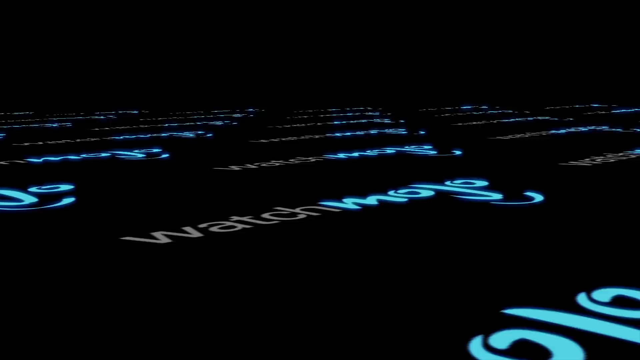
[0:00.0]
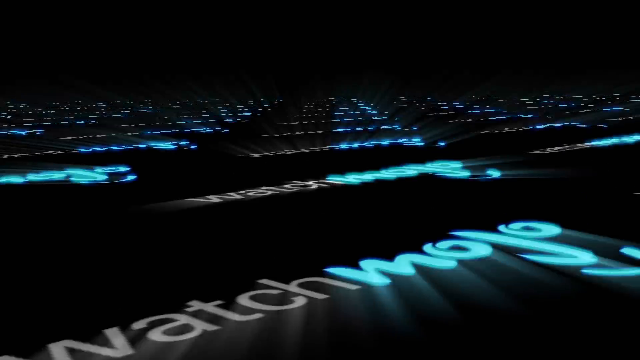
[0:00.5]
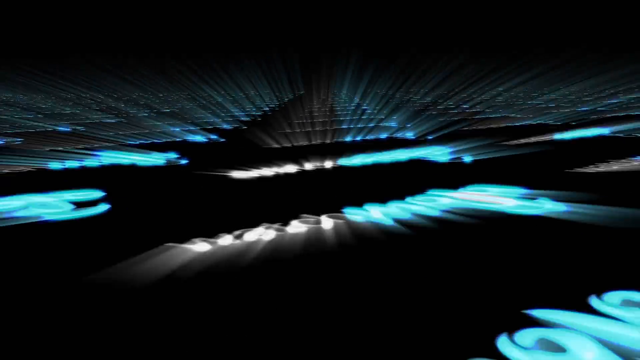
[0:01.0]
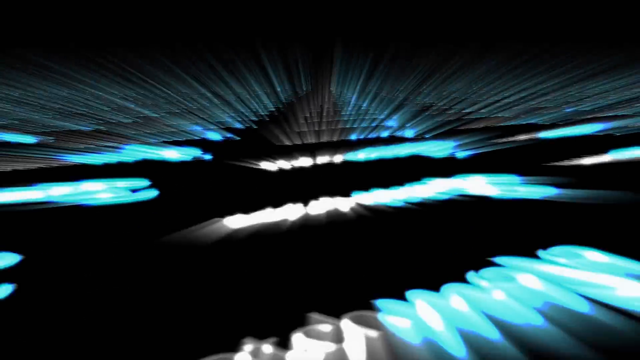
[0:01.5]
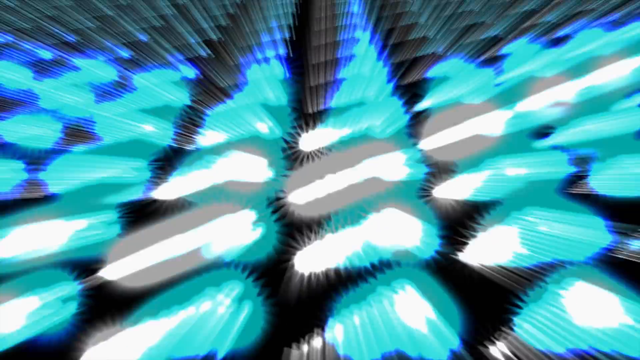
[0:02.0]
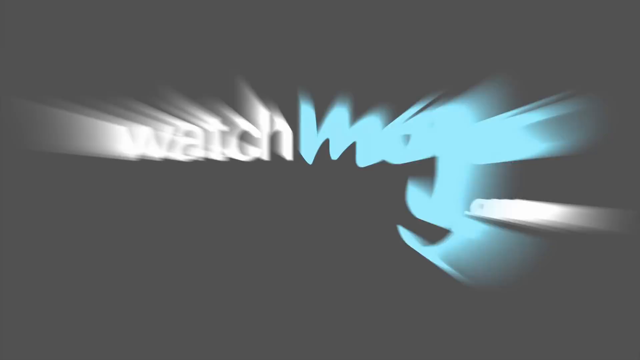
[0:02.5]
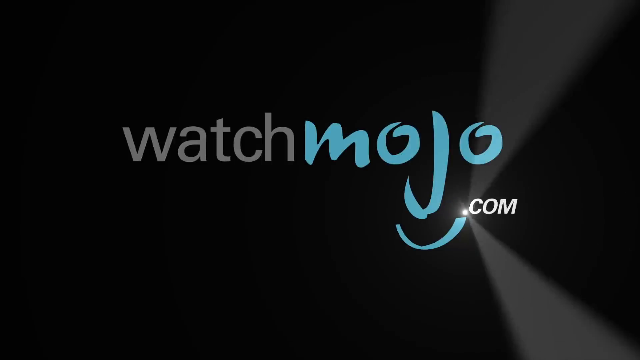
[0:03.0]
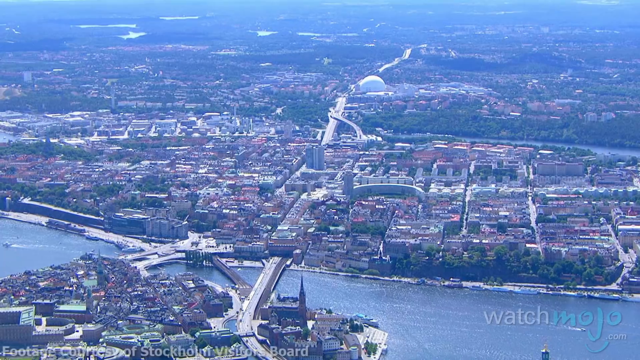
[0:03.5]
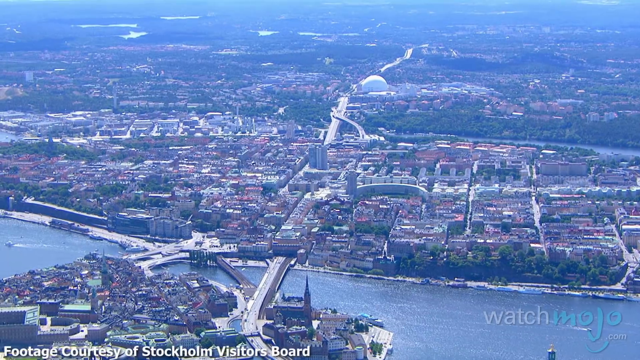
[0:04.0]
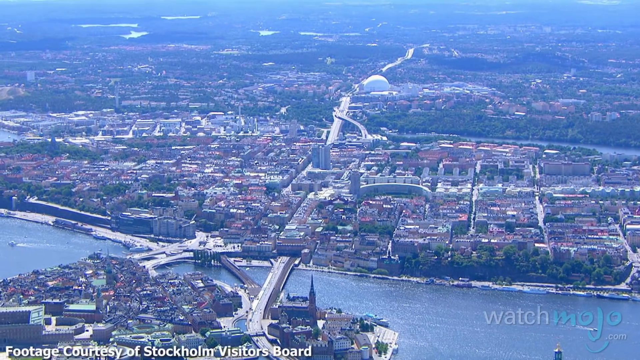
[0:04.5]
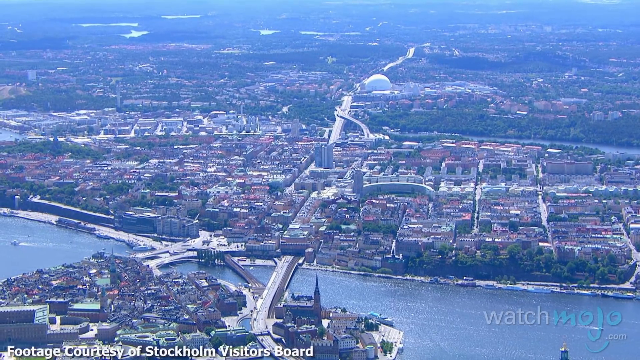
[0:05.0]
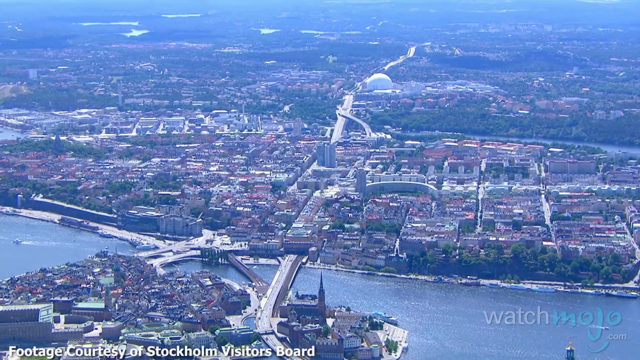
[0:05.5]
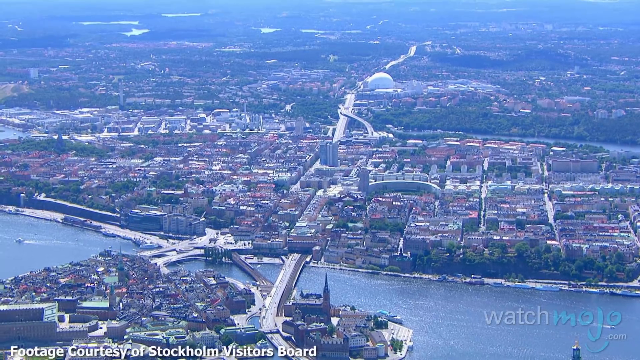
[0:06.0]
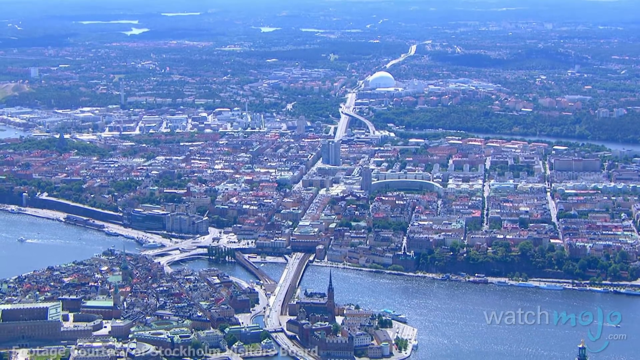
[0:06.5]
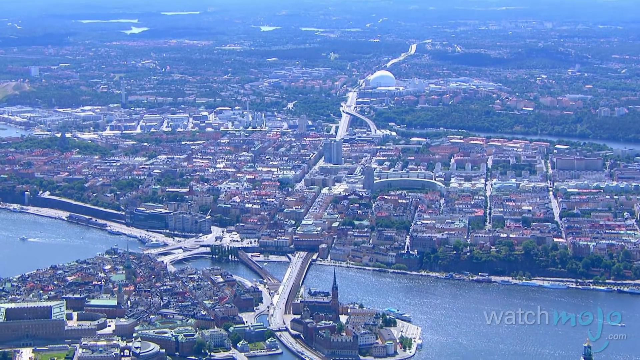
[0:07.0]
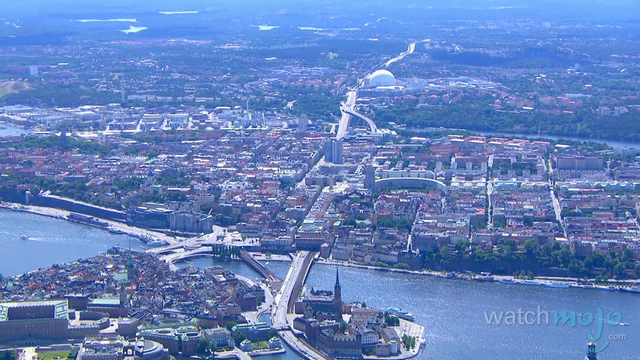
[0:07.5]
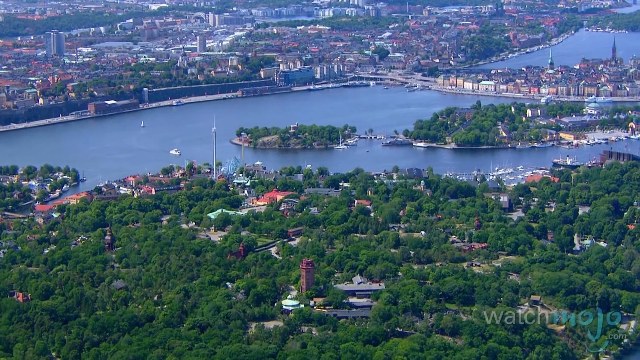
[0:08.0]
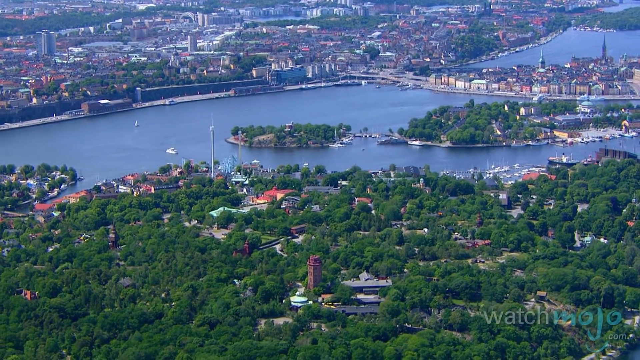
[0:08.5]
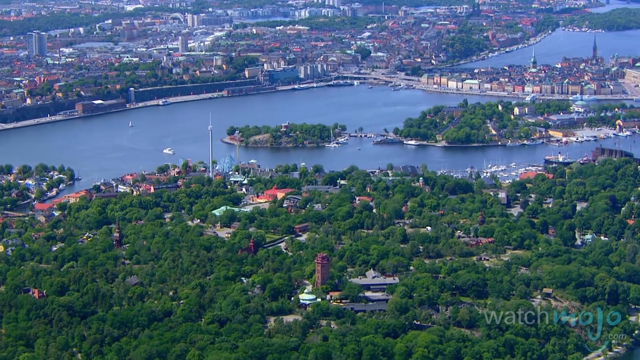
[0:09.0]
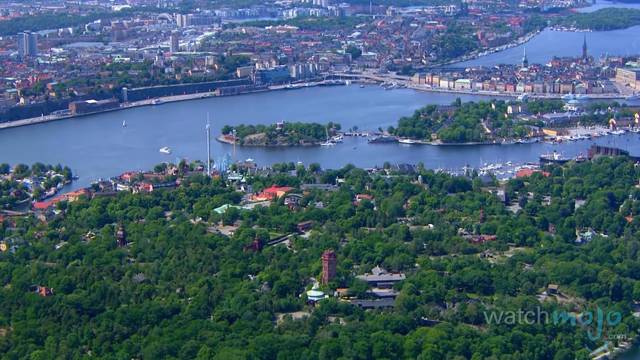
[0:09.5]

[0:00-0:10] The video is on watchmojo.com and consists of courtesy footage of Stockholm, Sweden, from the Stockholm visitors board, presented as a visitor's guide. It opens with an aerial view of the city: an urban area with a river flowing through it, bridges, and what look like trains going through the city. There is some marine life, and several boats are in the water. A main bridge appears to run from the southern portion of the view to the northern portion. Several bodies of water seem to flow from east to west, and there is a little island in the middle of the one closest to the viewer. The view is very scaled out, showing the overall area, maybe even the entire city.